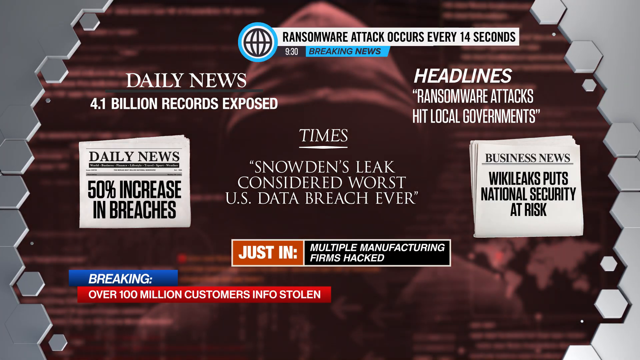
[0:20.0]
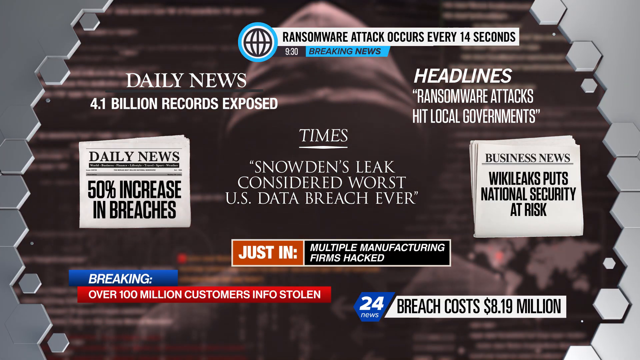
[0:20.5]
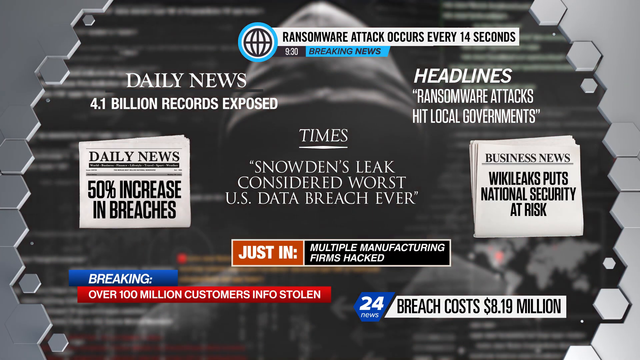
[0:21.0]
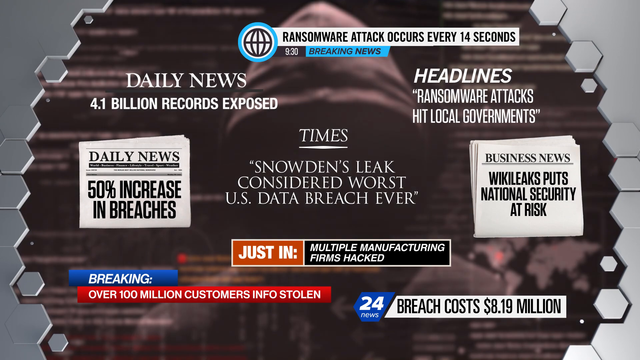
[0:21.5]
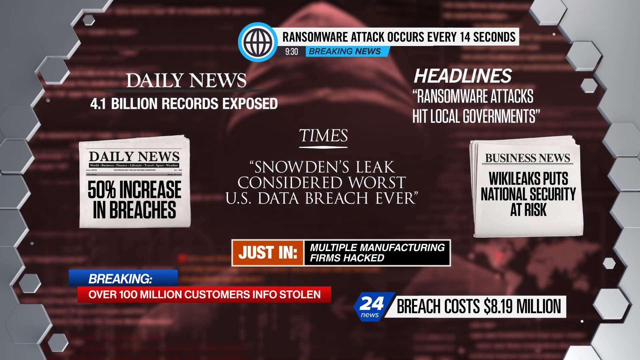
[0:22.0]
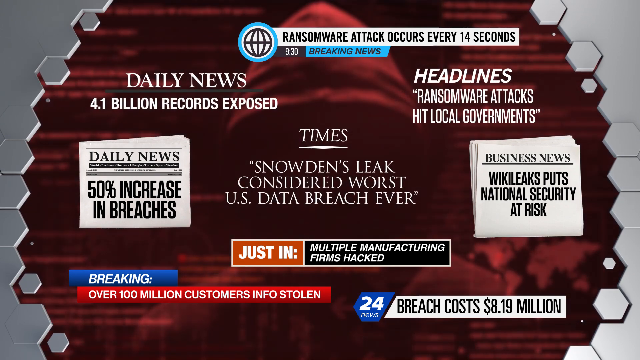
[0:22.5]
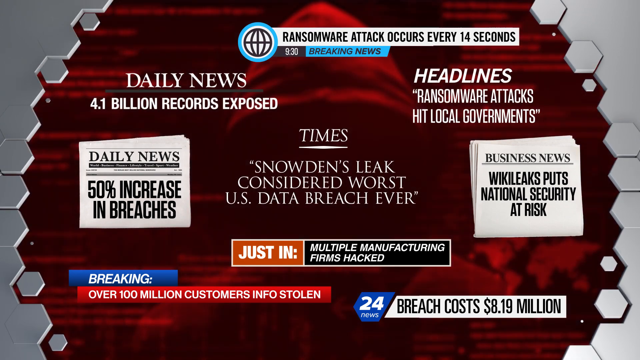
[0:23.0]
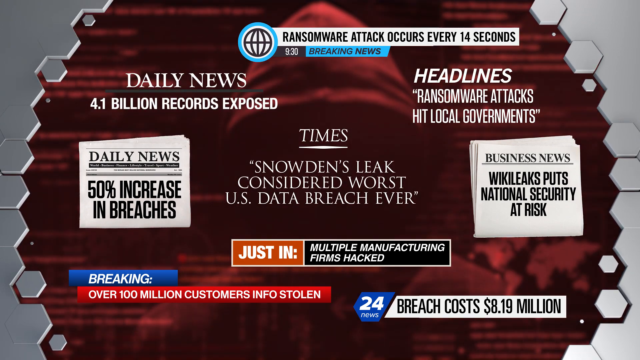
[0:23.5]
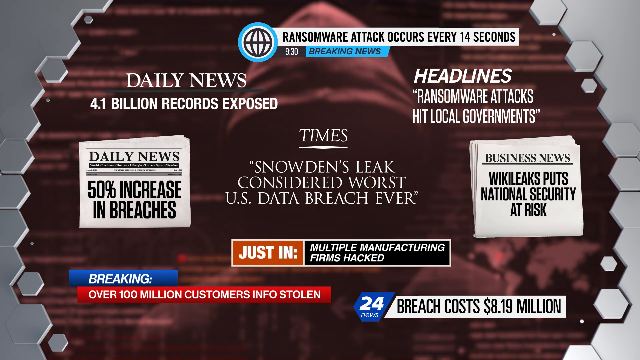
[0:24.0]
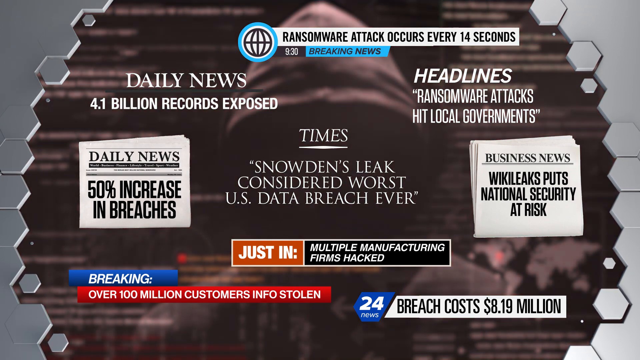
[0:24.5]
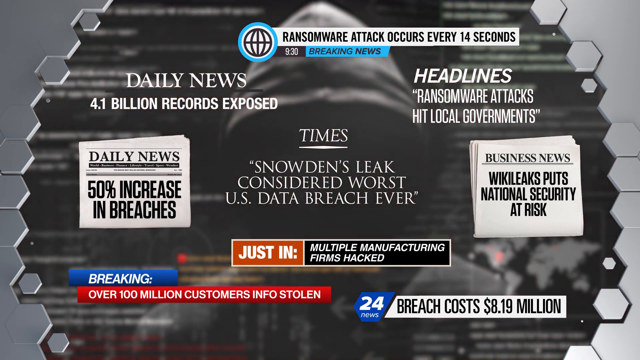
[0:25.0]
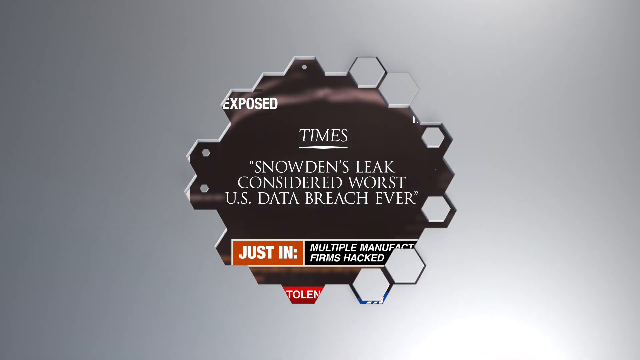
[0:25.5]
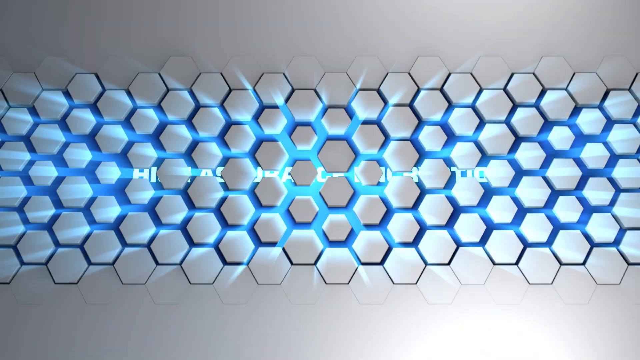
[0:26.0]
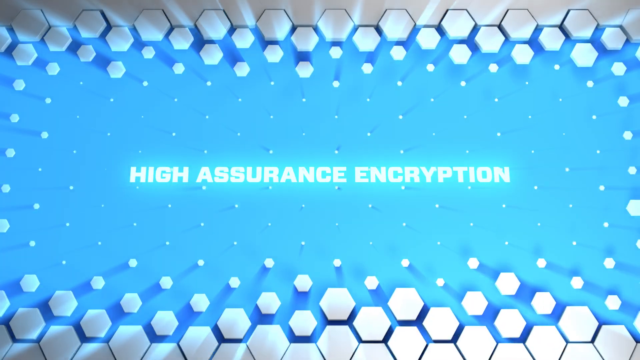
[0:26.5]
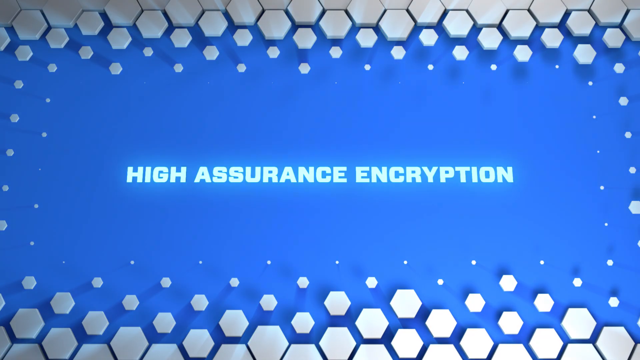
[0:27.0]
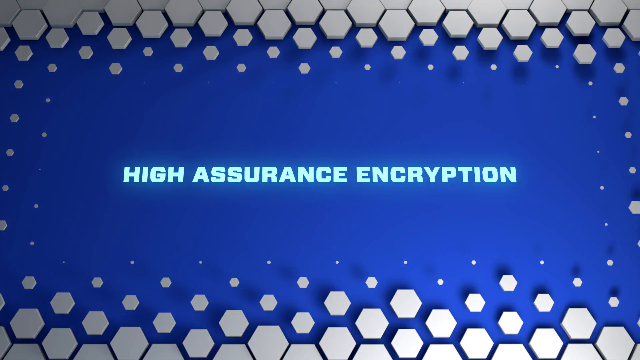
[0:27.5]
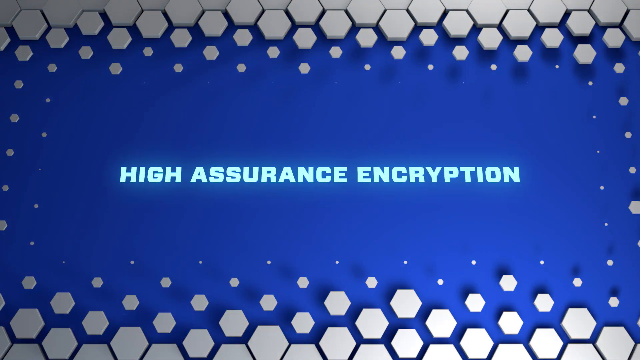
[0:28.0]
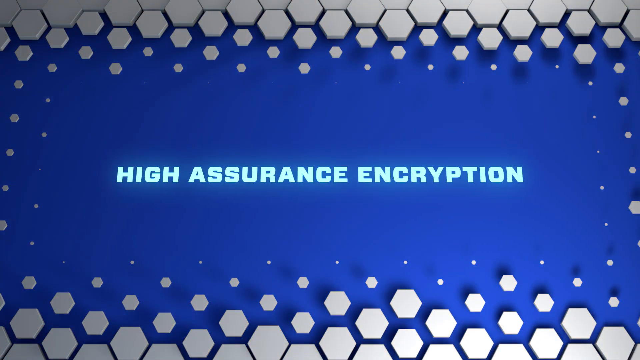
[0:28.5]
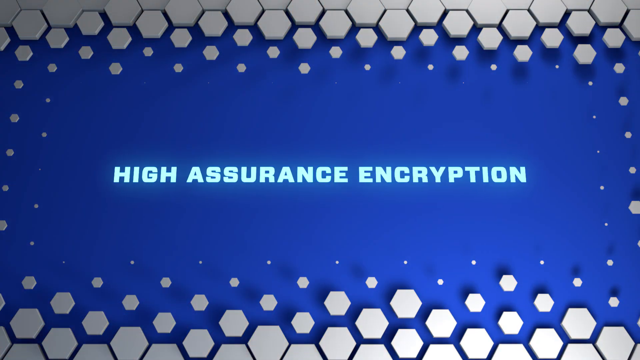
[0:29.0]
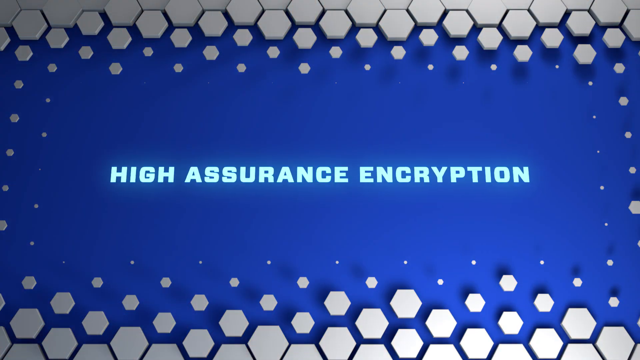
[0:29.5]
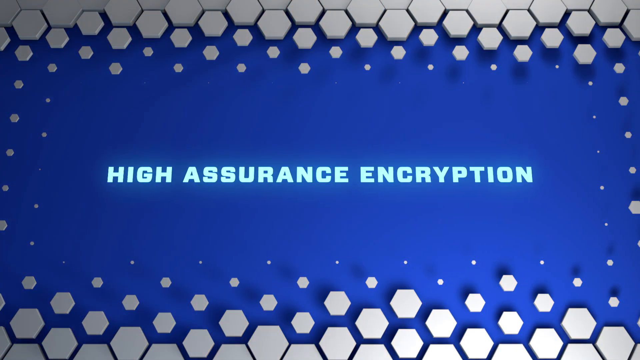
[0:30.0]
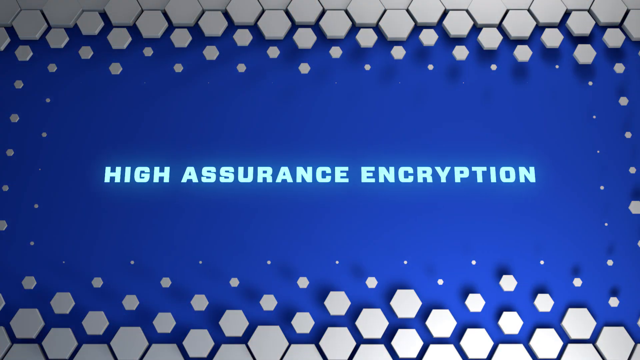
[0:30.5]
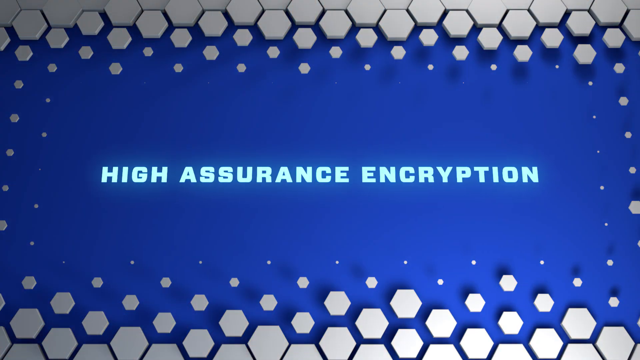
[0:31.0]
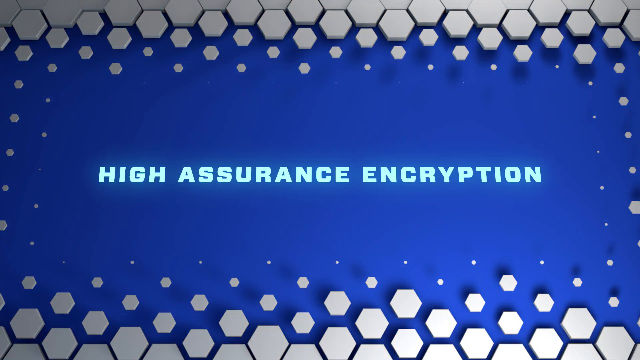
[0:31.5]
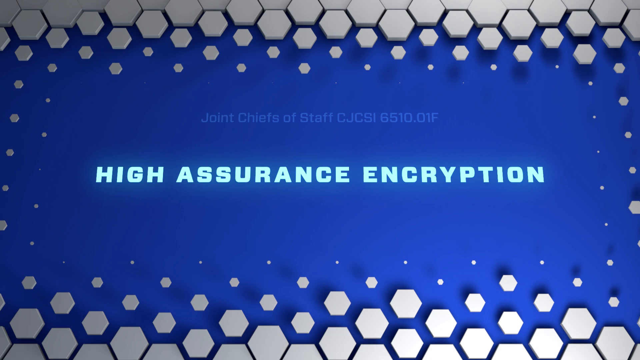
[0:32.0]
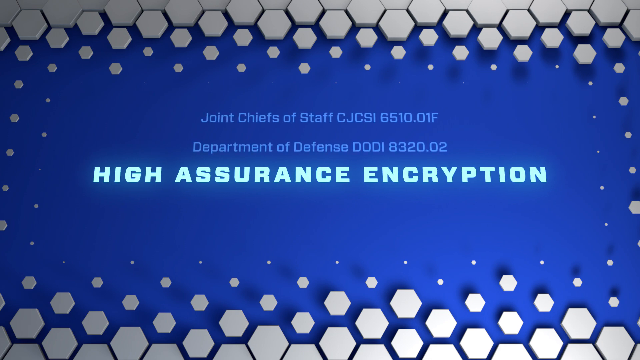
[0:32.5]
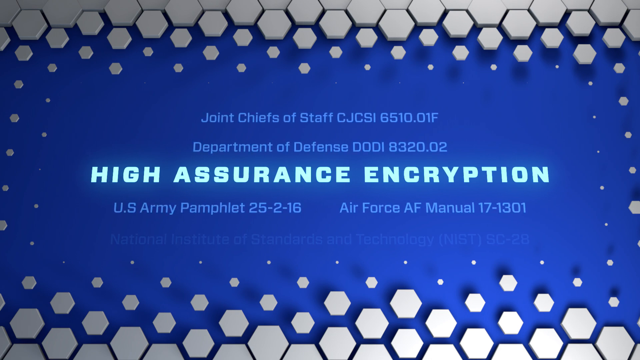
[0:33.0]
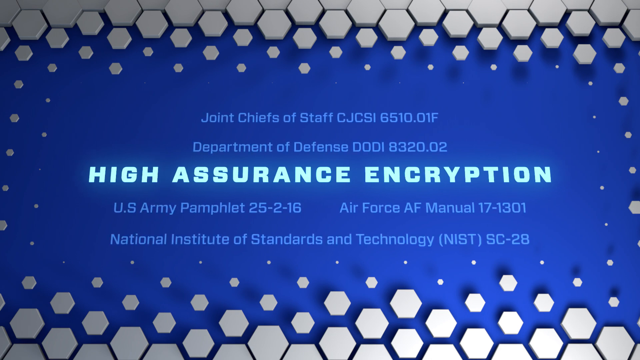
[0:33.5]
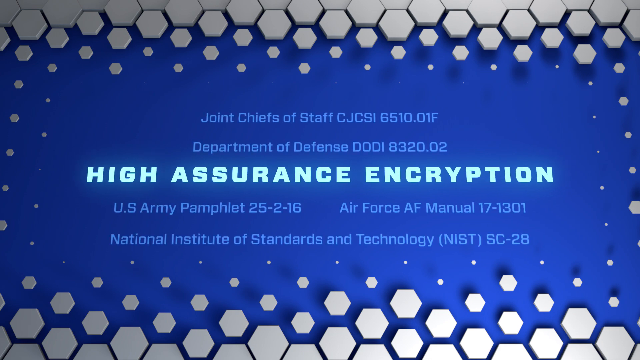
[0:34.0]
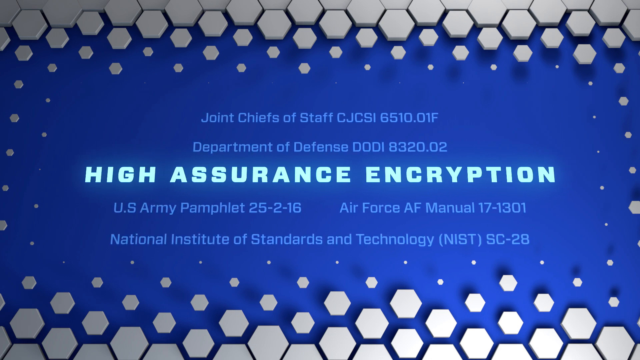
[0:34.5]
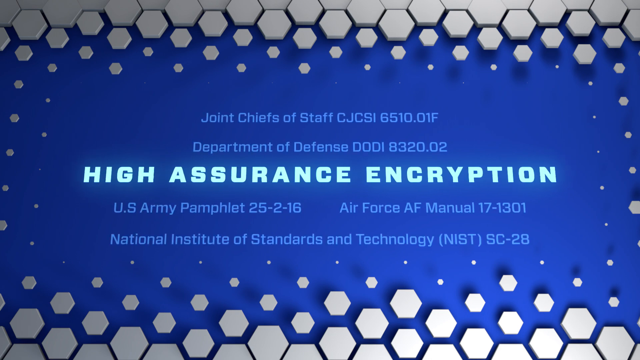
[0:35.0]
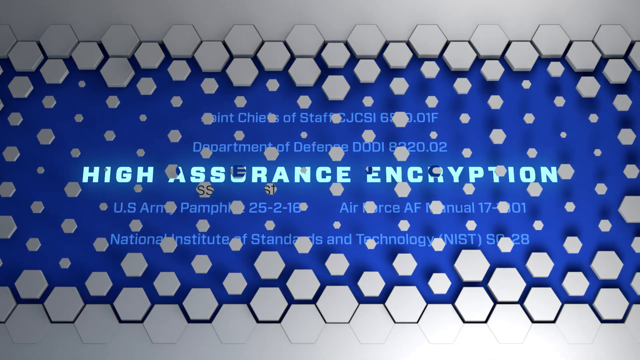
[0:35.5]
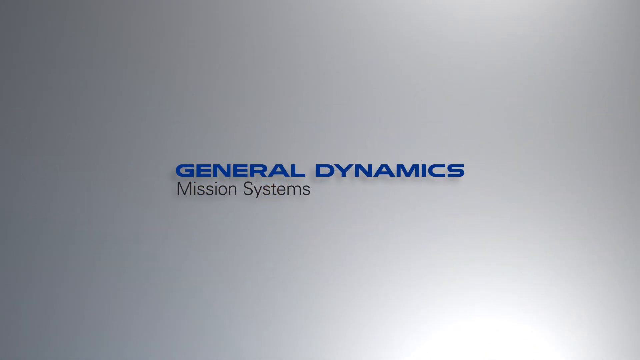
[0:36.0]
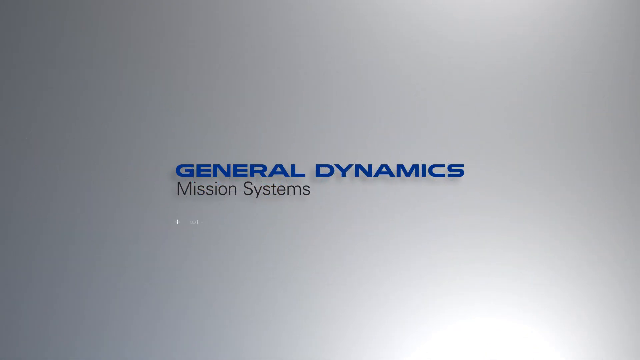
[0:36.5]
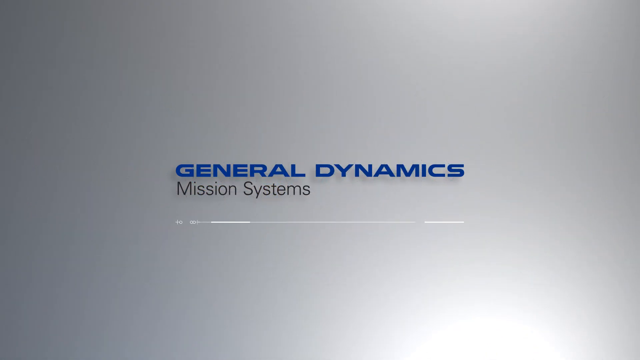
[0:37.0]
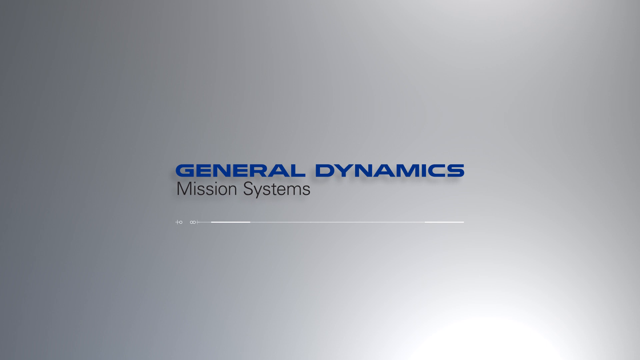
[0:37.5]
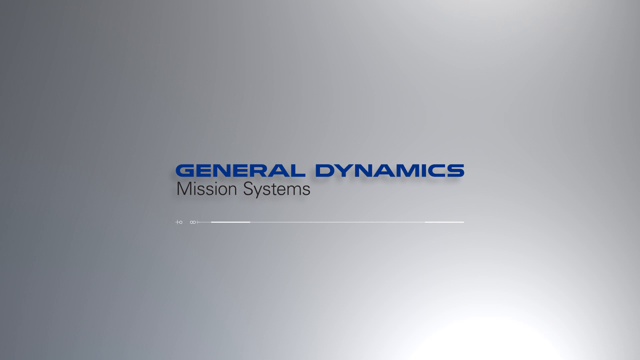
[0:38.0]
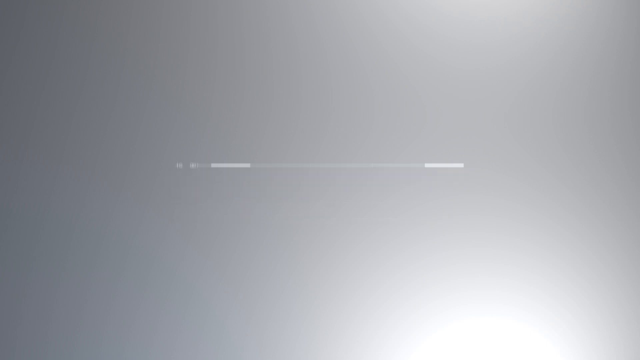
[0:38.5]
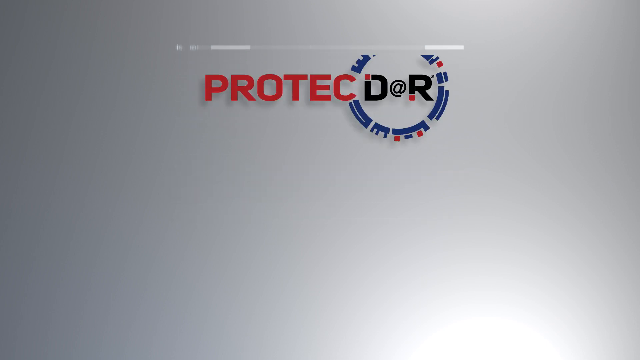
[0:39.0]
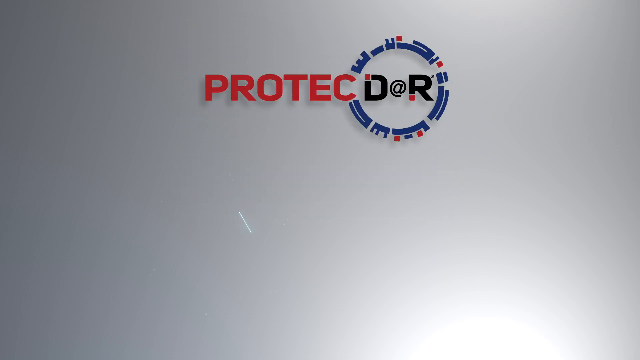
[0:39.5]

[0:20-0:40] Quotes from news outlets fill the screen. In the middle is one from the Times reading "Snowden's leak is considered the worst U.S. data breach ever." At the bottom right is one from 24 News reading "the breach cost $8.19 million." Next, neon light blue text reads "high assurance encryption," while more transparent text pops up in the background reading "Joint Chiefs of Staff," "Department of Defense," and some other titles. A General Dynamics logo then appears, followed by a logo for a company named ProtectDoor, which might be the company behind the video.